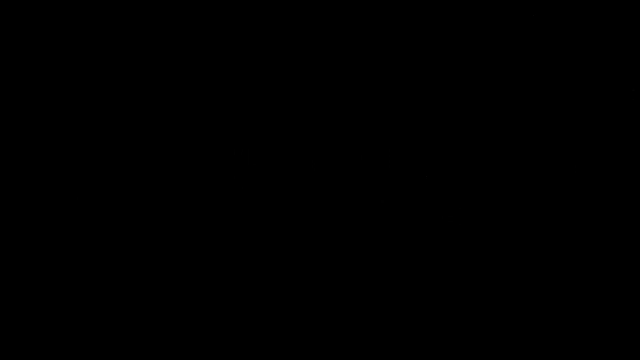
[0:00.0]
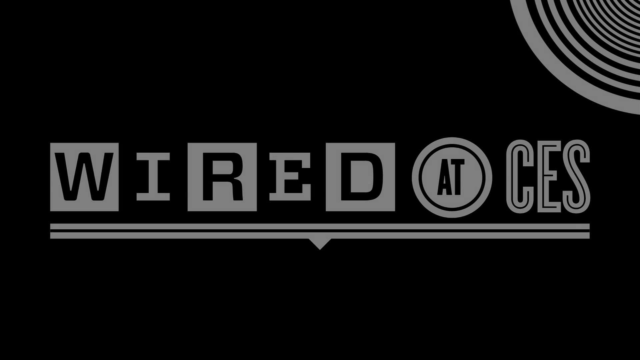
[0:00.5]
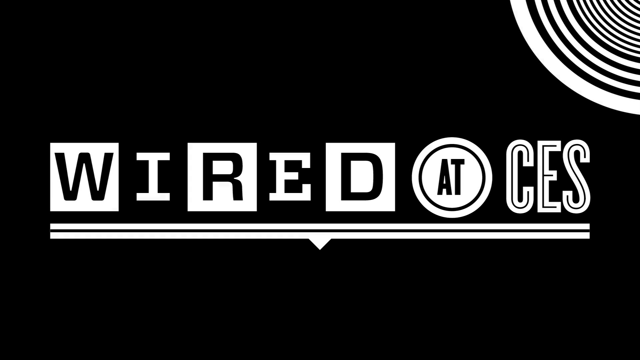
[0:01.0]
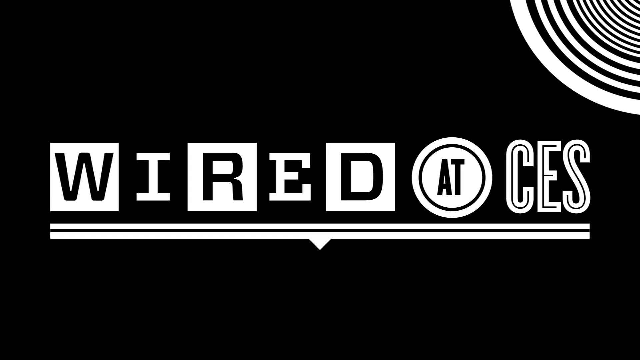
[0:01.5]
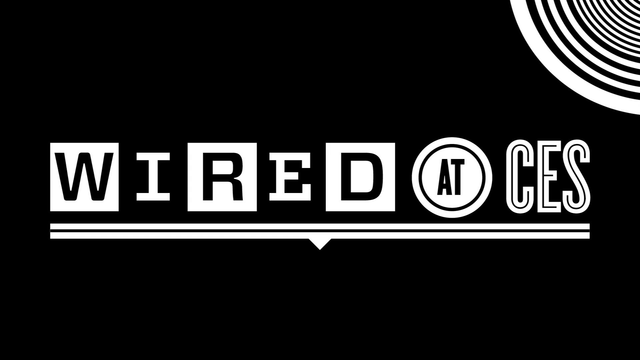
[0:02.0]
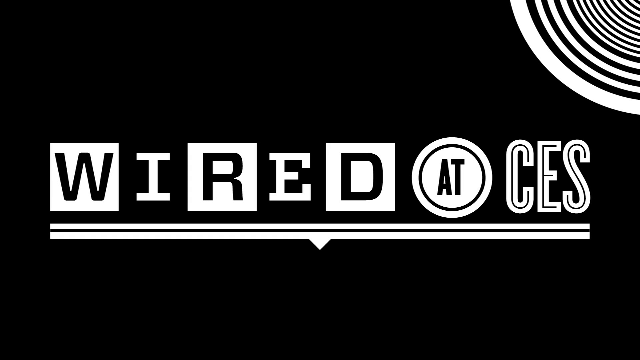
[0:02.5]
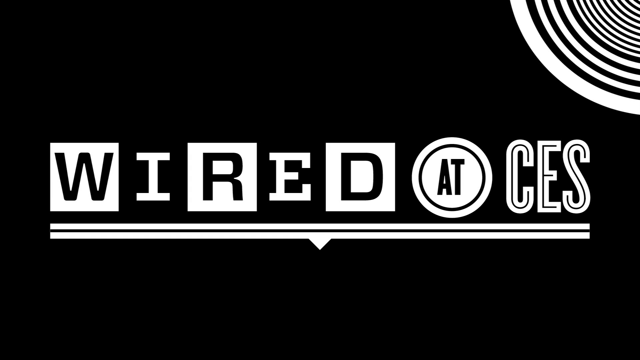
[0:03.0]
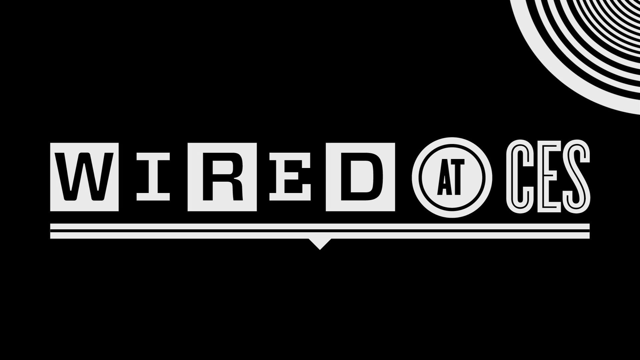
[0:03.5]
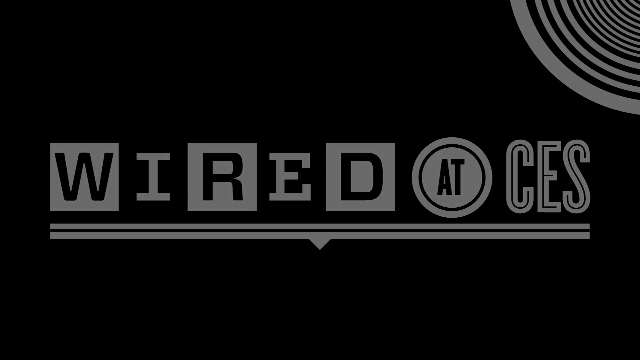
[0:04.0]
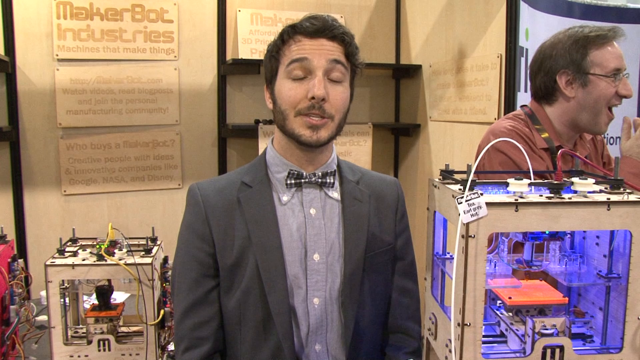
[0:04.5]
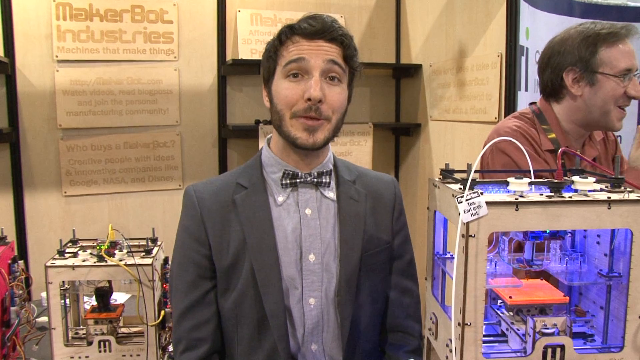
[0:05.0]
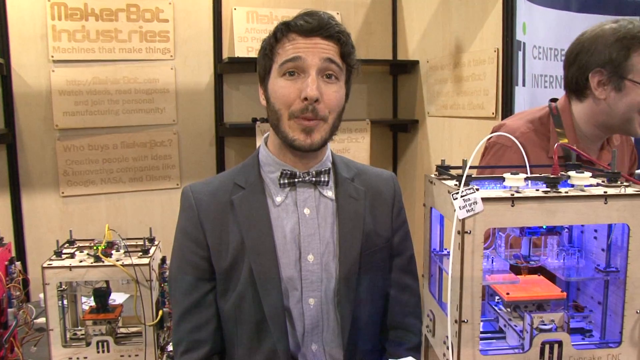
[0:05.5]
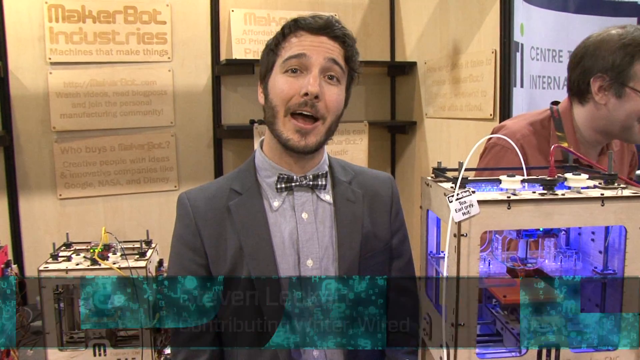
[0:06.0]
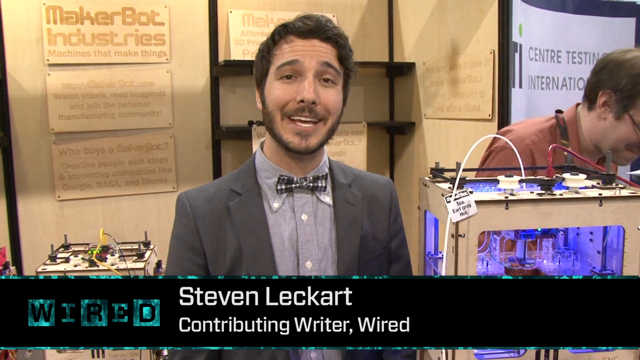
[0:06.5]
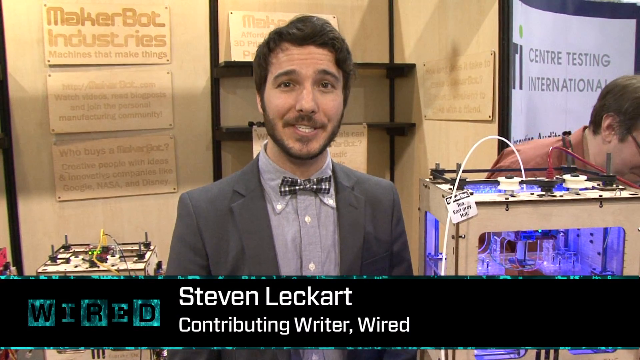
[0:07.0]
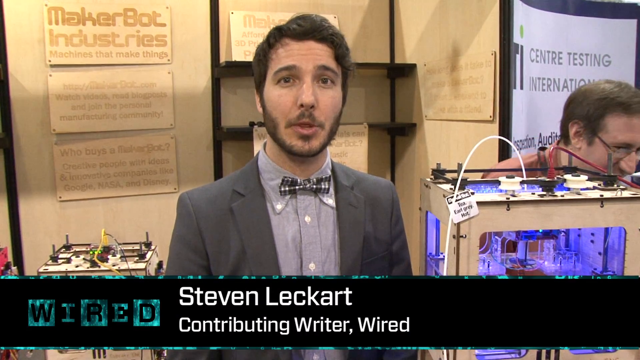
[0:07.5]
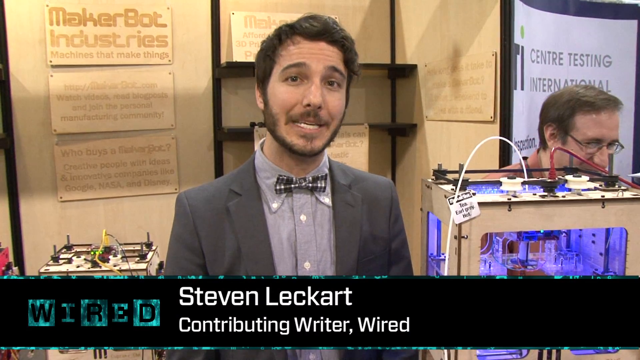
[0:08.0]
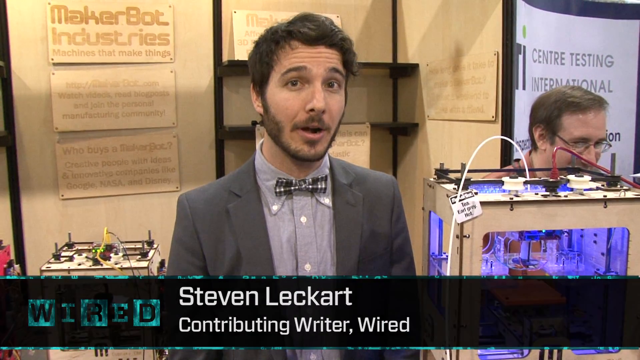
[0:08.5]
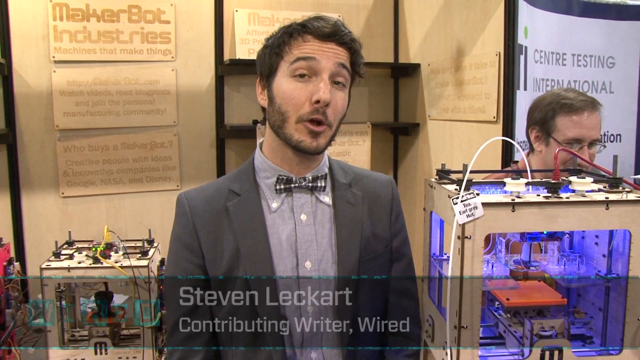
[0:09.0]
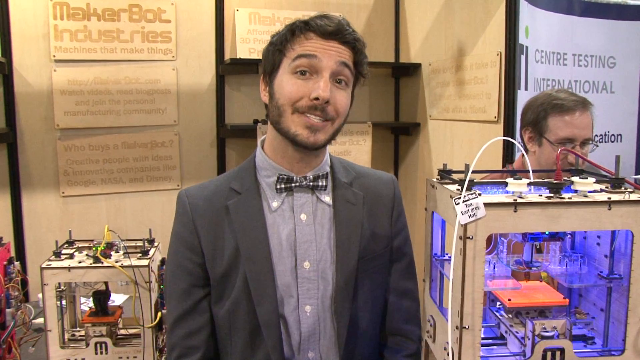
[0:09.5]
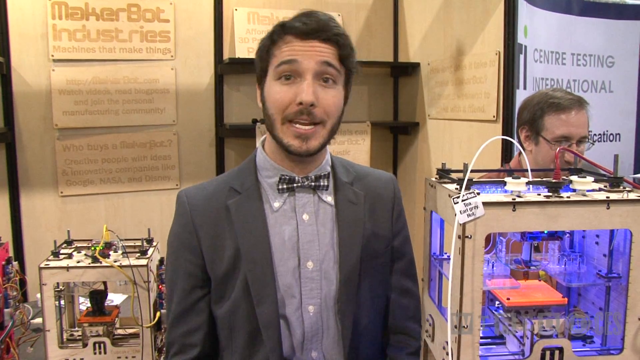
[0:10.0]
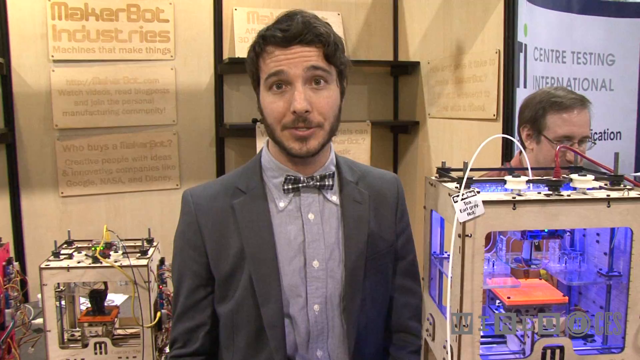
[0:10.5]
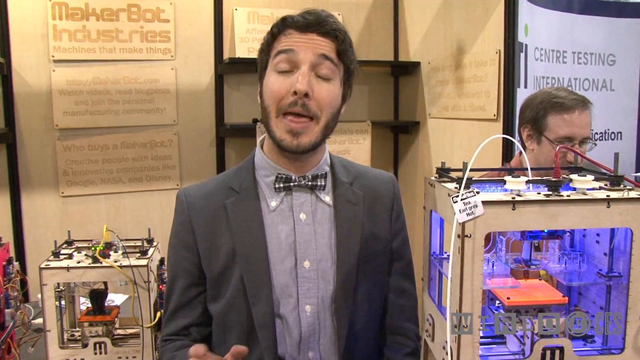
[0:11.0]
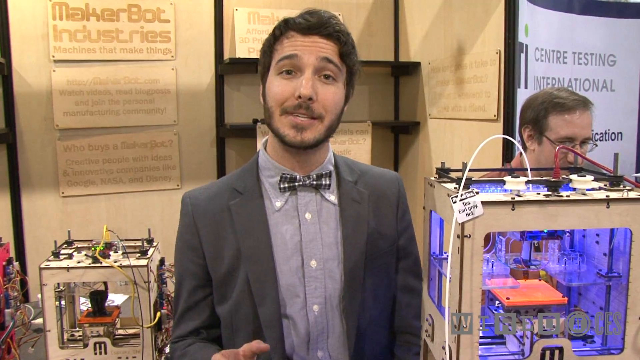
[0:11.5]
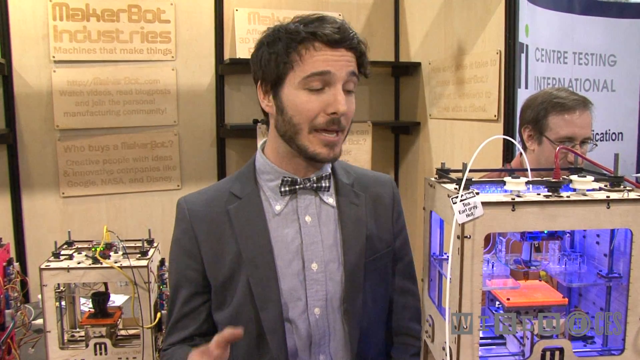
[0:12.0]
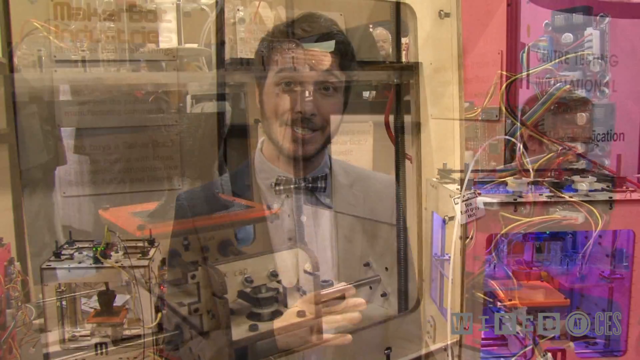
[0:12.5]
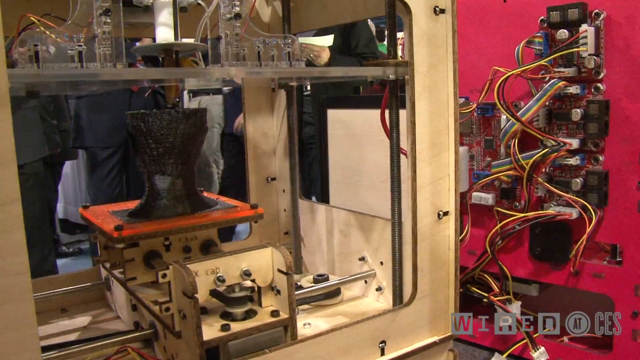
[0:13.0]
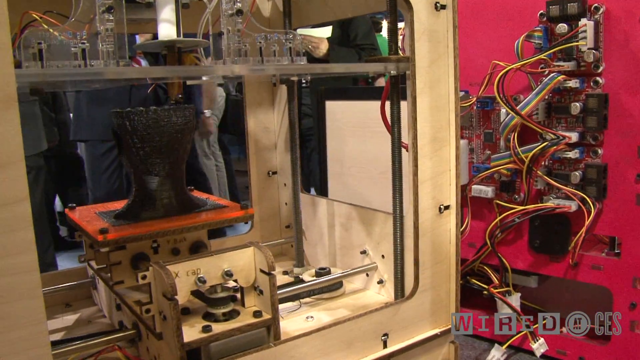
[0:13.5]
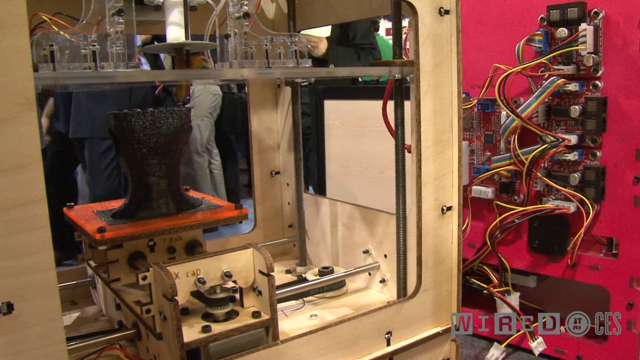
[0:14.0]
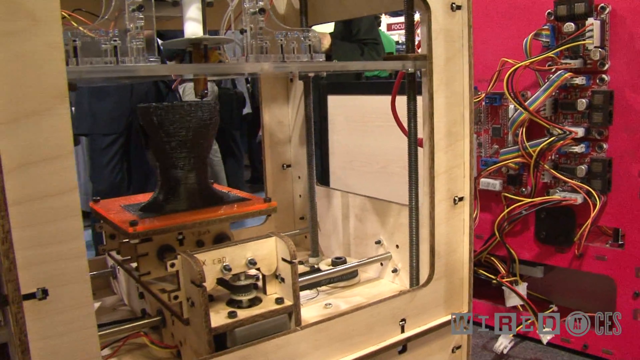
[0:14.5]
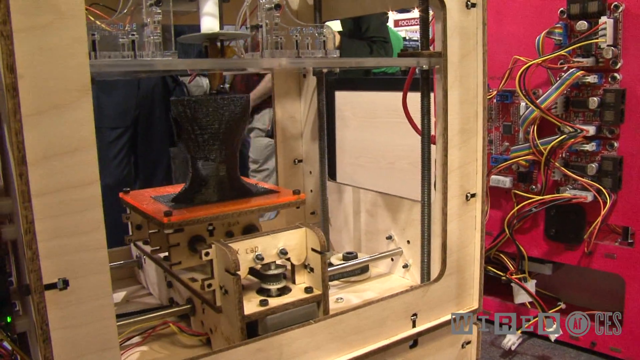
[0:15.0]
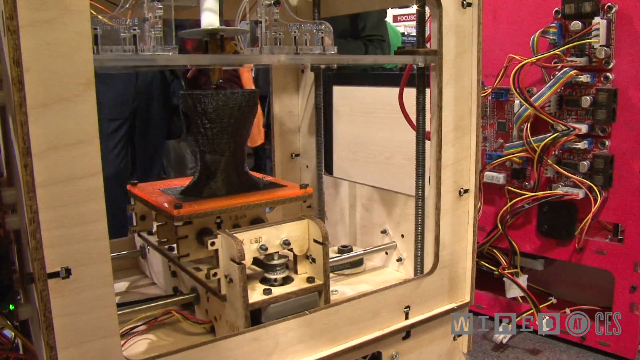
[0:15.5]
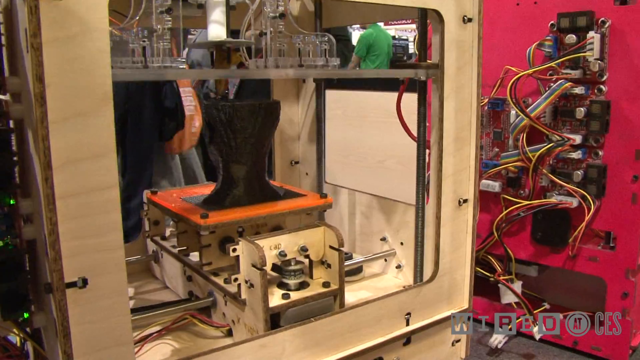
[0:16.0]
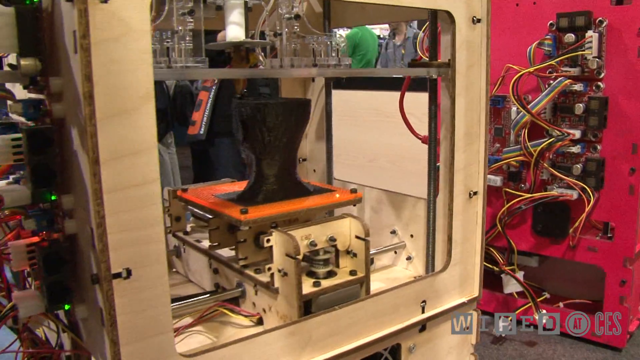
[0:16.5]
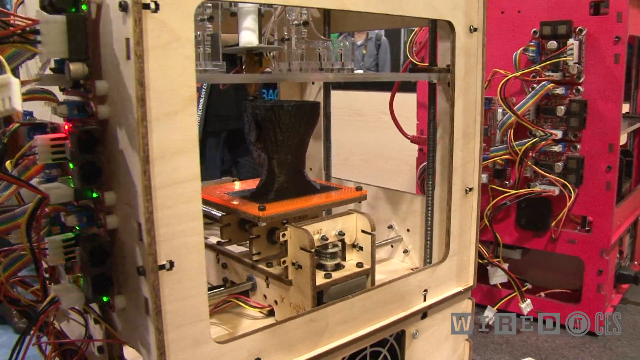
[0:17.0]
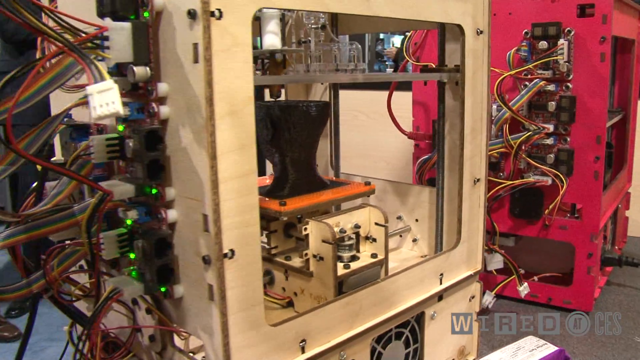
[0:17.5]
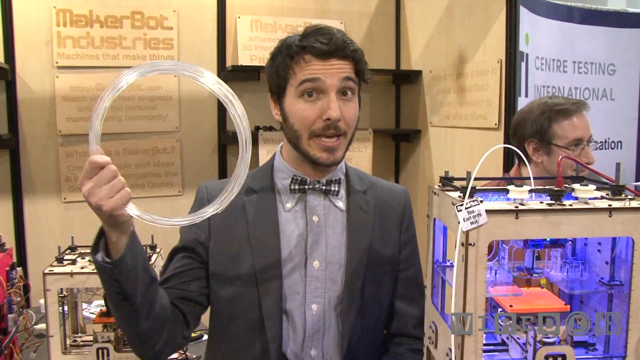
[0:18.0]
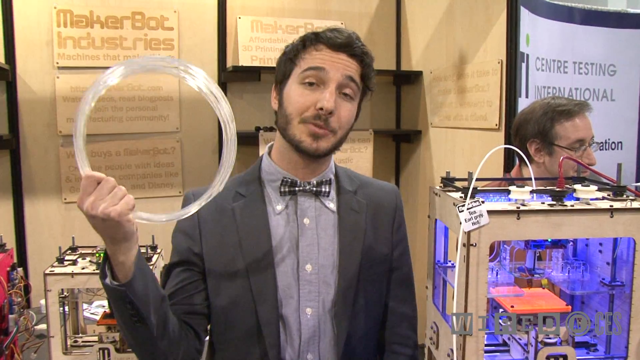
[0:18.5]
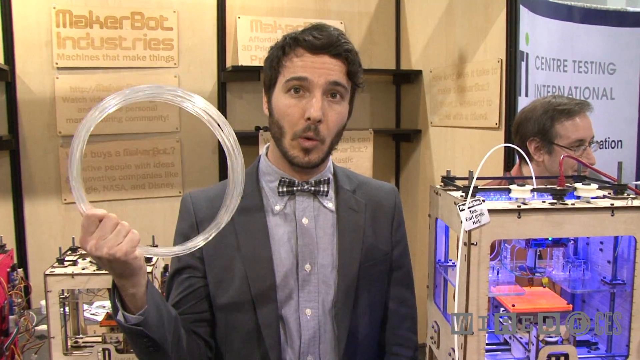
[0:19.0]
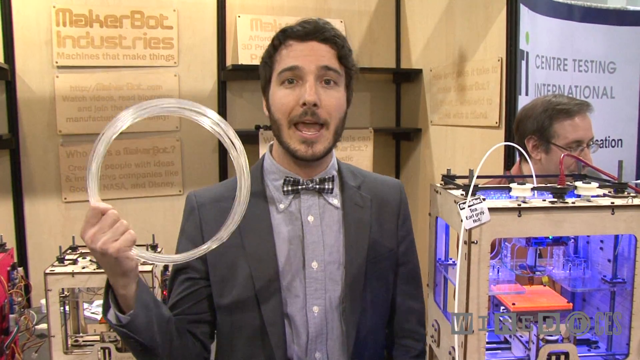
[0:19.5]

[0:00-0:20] A man stands front and center, apparently presenting some kind of product. Text under him gives his name as Steven Lecker, and beneath the name it says "contributing writer for Wired magazine." He wears a nice jacket and a bow tie and has a beard; he is well-dressed. He seems to be in some kind of high-tech environment, possibly with a 3D printer. A few different men stand behind him, apparently doing their work. At the end he holds up a plastic ring. The camera then shifts to what looks like a printing press, or possibly a 3D printer, which may be printing the rubber circle he is holding.